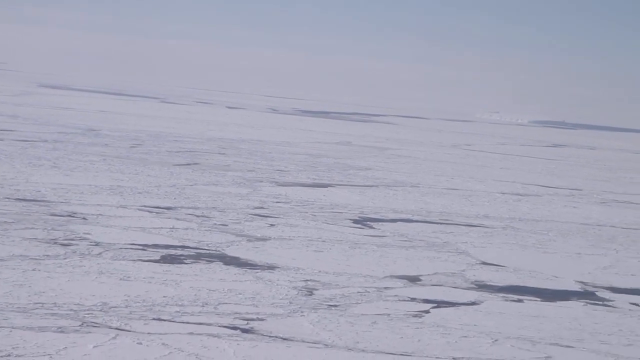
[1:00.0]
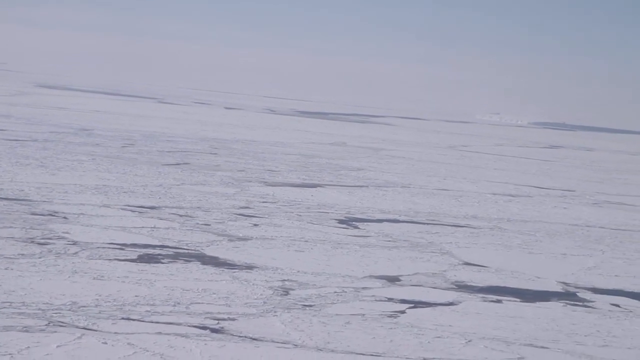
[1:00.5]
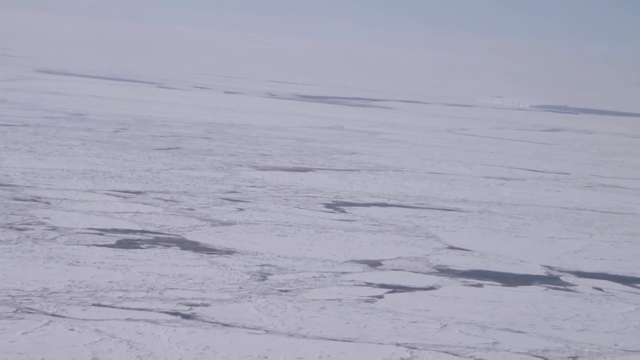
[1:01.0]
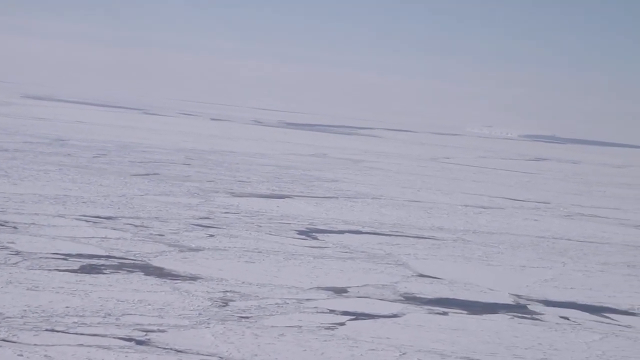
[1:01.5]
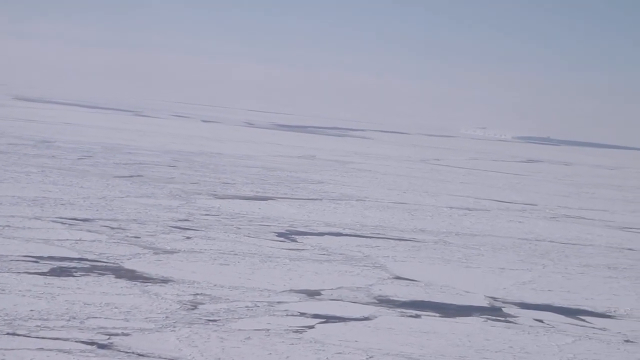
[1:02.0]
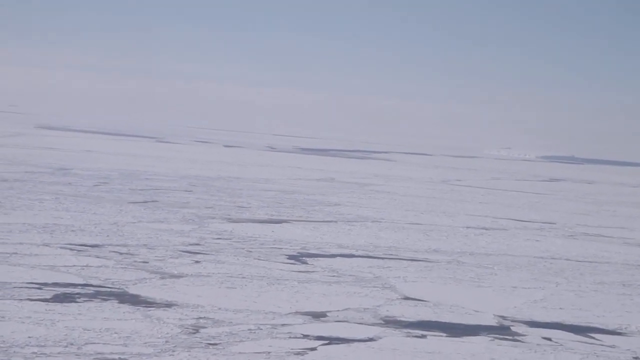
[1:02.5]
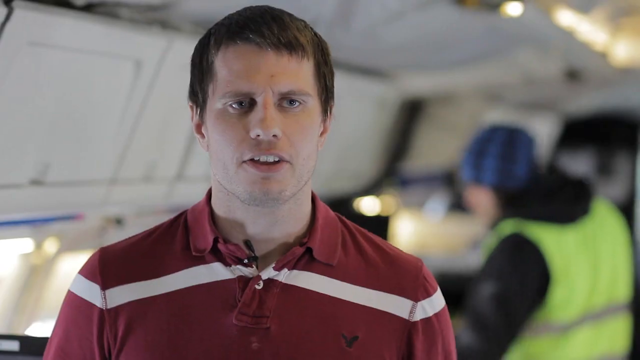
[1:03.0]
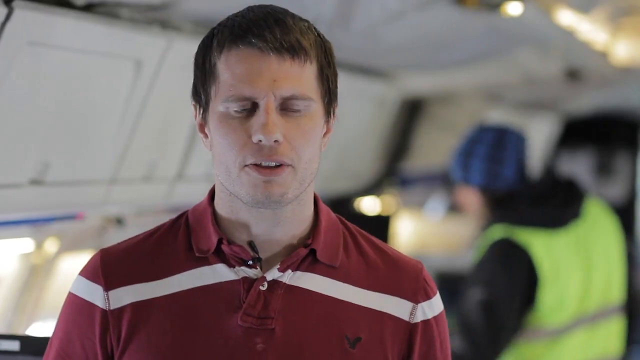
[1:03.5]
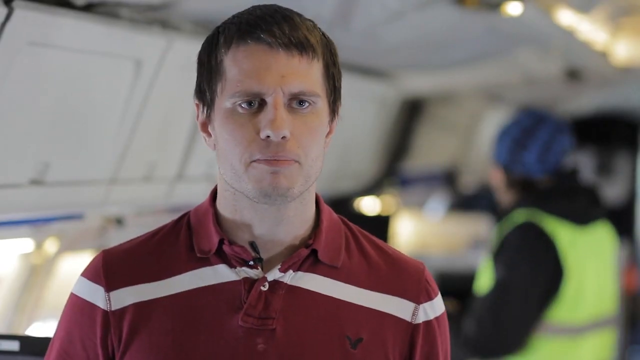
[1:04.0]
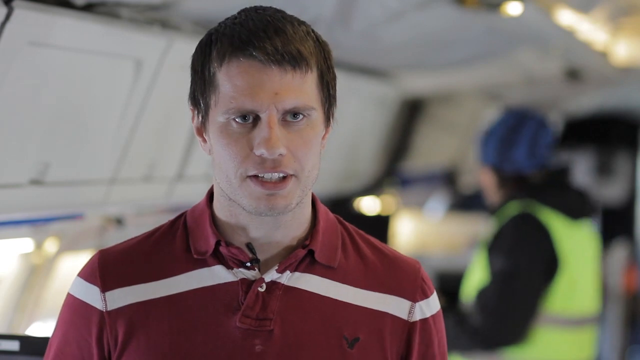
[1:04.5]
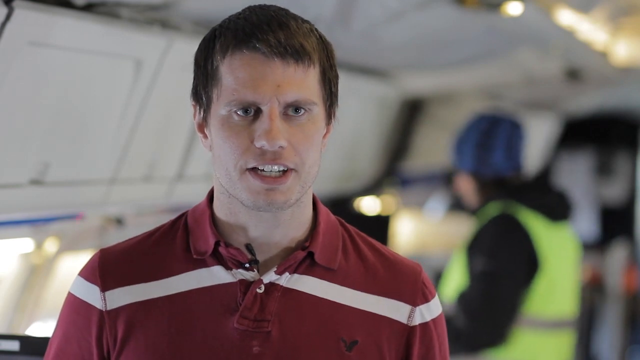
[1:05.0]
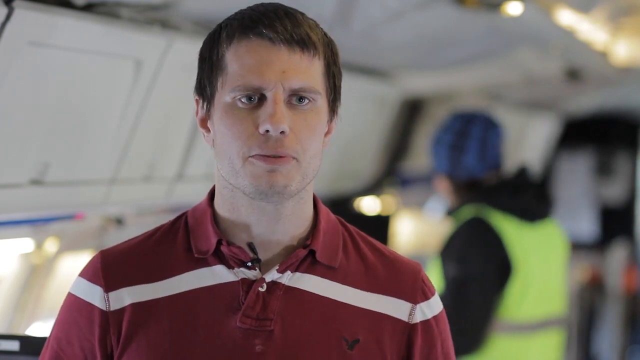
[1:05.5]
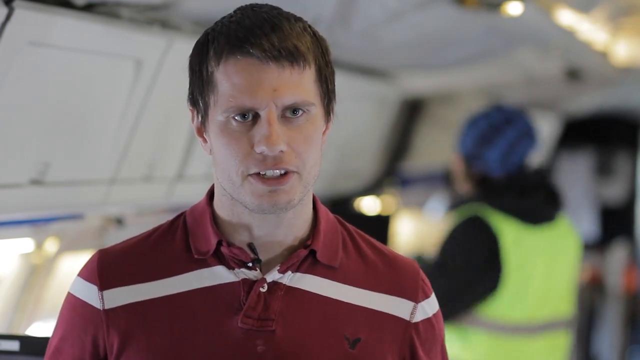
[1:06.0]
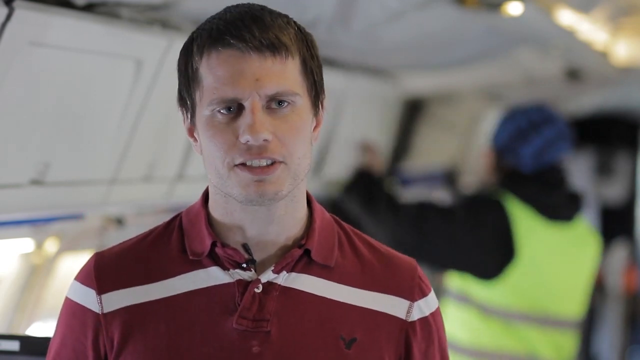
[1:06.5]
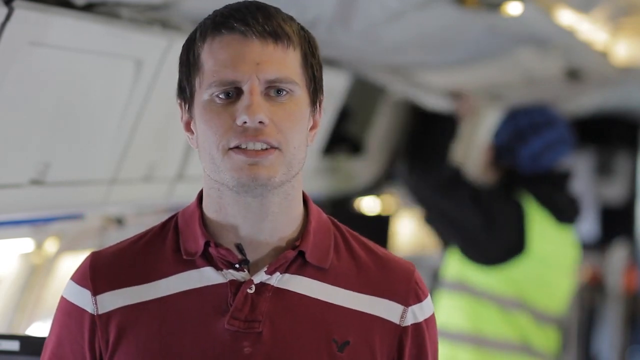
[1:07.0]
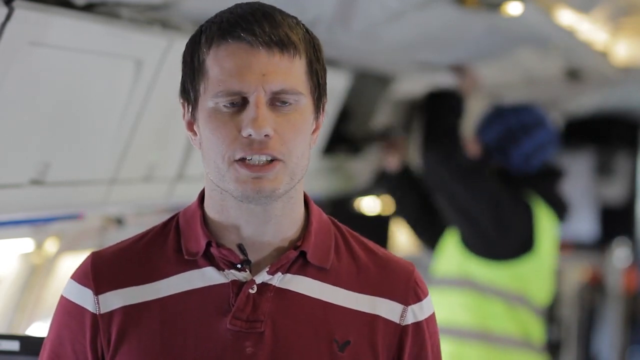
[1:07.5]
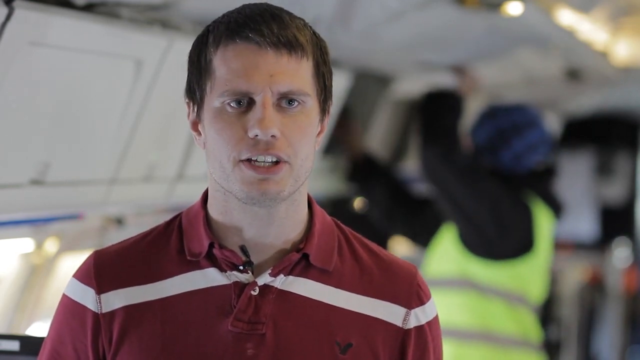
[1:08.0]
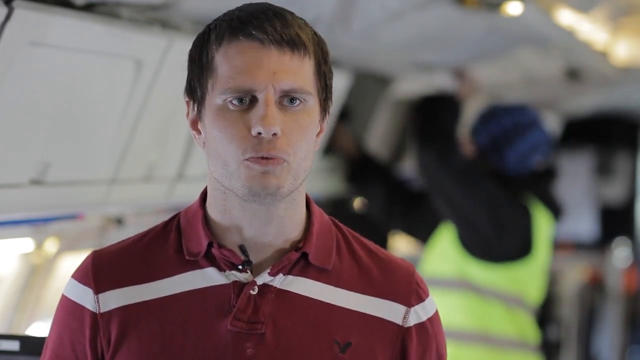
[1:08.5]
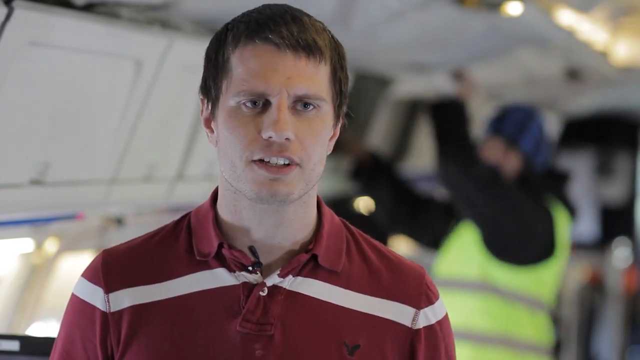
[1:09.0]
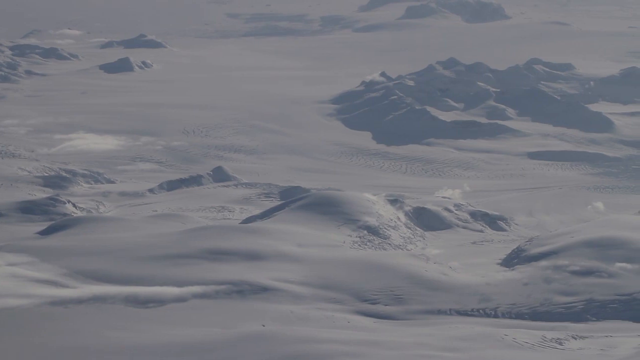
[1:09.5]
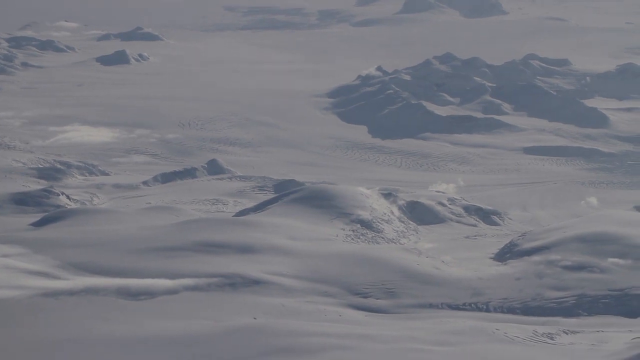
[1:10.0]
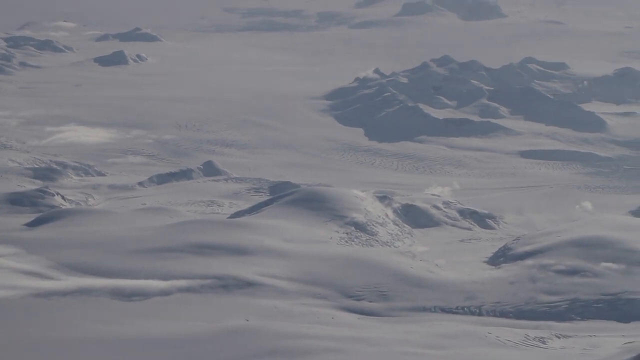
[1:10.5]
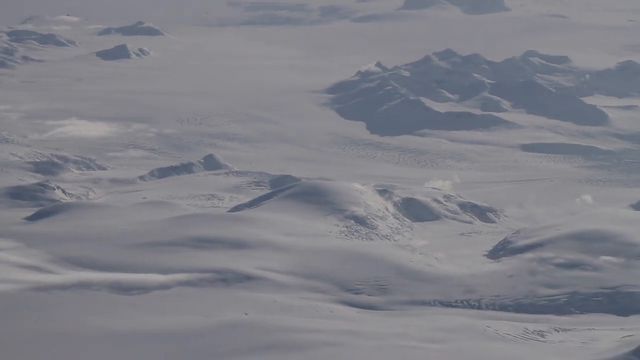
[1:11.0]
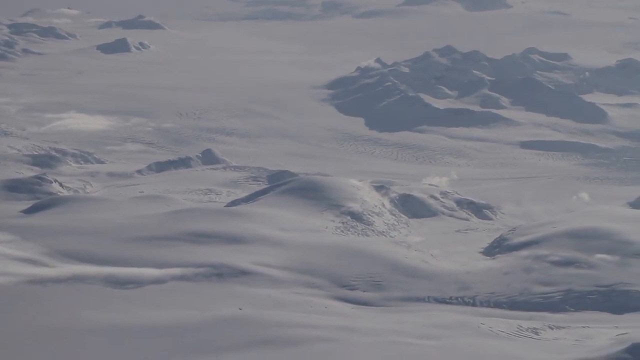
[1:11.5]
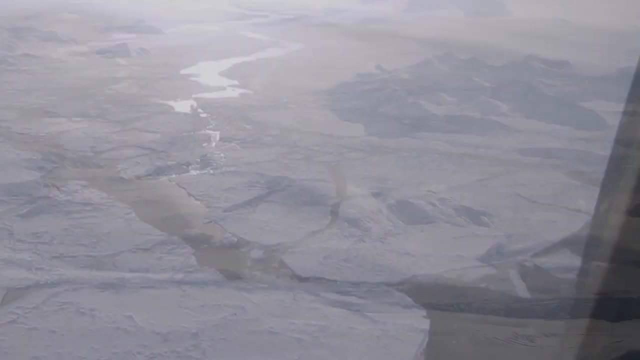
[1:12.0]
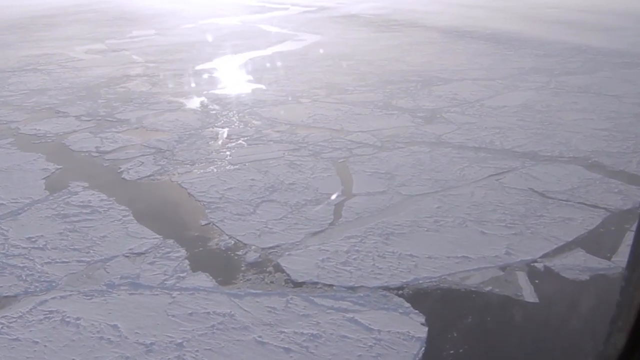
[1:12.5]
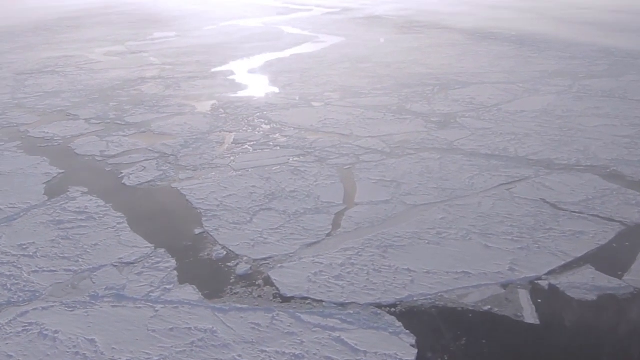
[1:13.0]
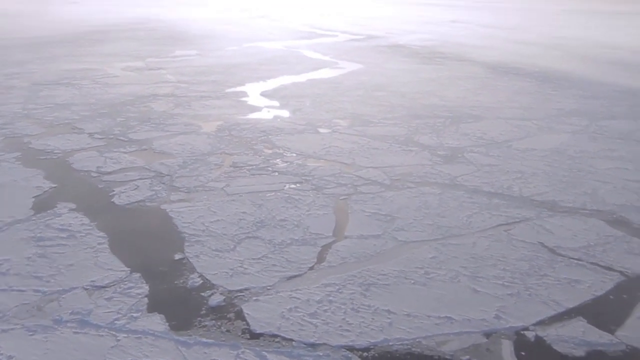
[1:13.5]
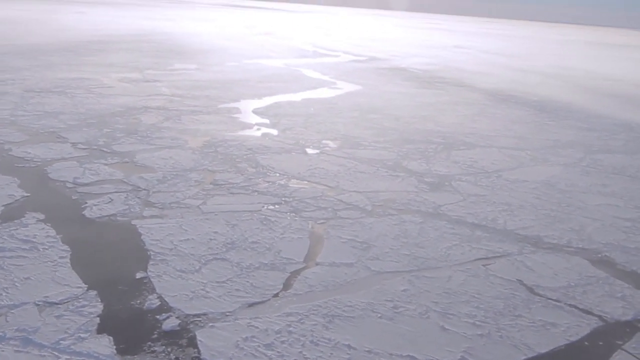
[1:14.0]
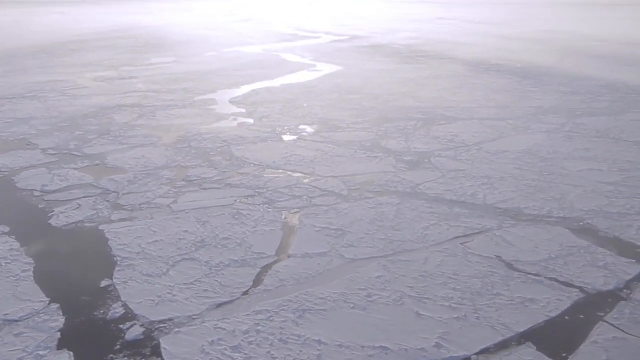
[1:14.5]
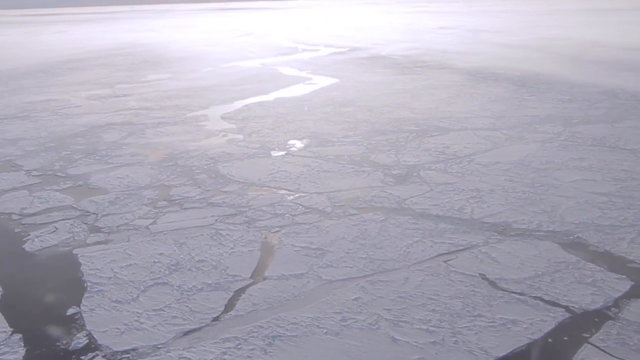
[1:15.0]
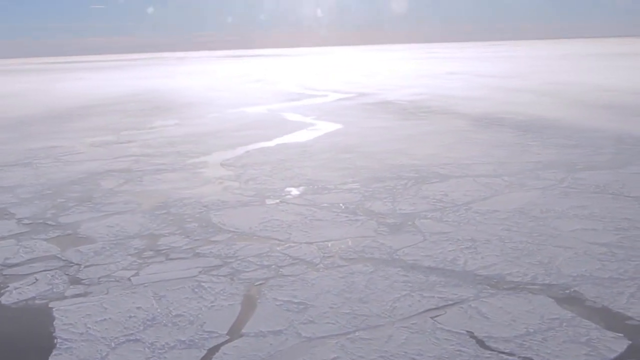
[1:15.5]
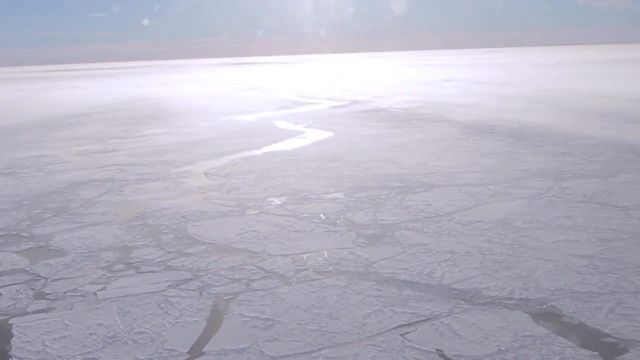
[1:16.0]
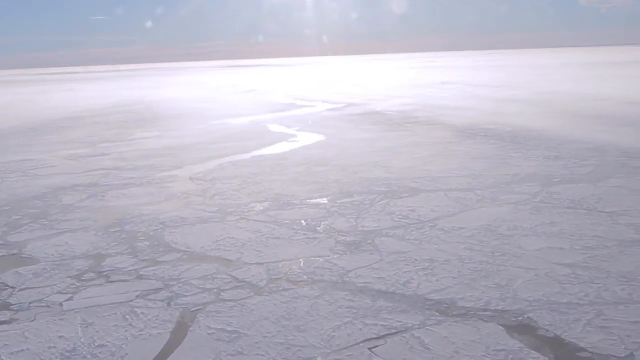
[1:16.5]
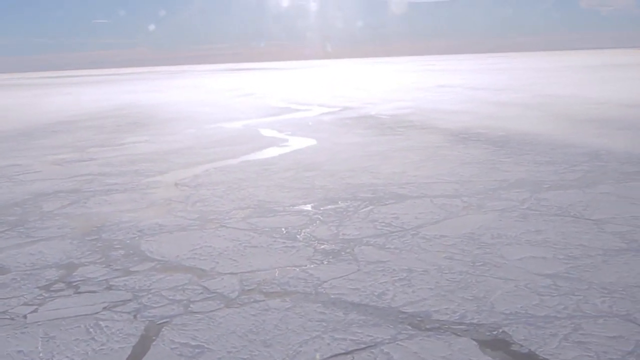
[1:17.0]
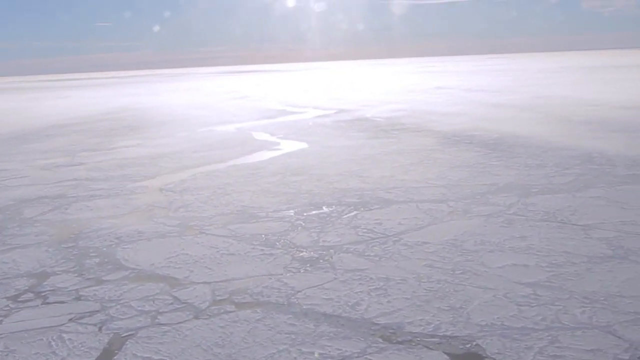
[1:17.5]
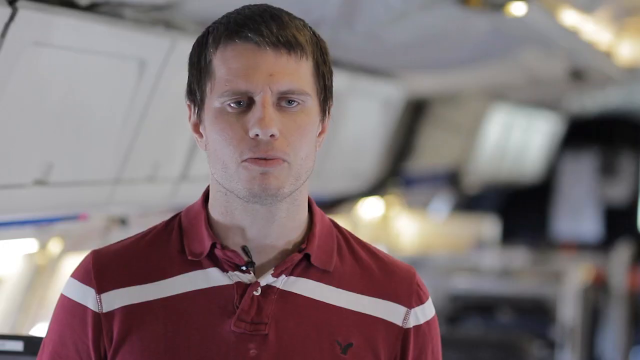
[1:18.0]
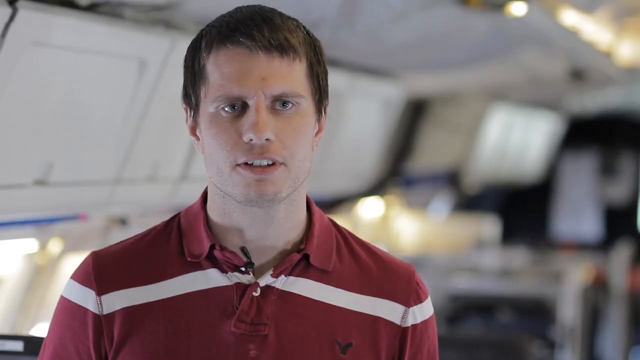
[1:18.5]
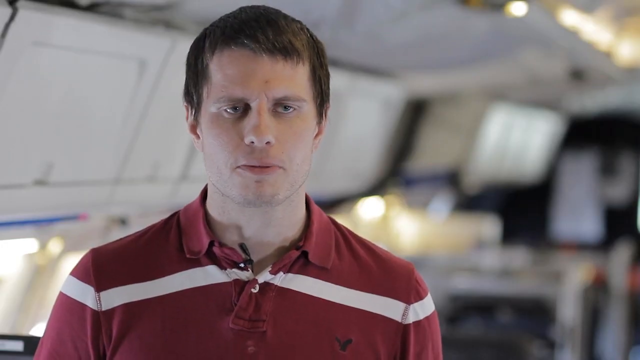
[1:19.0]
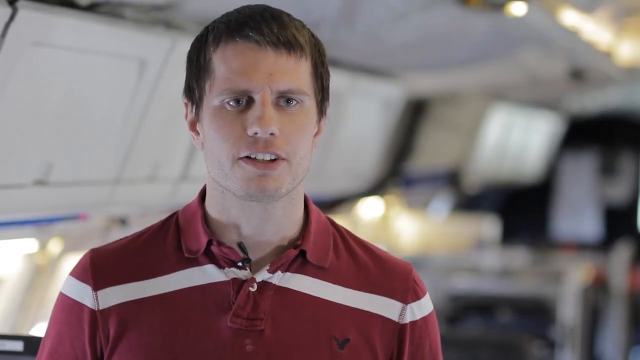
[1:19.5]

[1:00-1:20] An image shows an icy area like the North Pole, apparently showing the ice melting. A man in a red and white shirt appears on screen, talking, and a NASA symbol is shown. The view returns to the ice and tundra, then a higher-up view shows a lot of melted ice. The man then returns to the screen, talking.